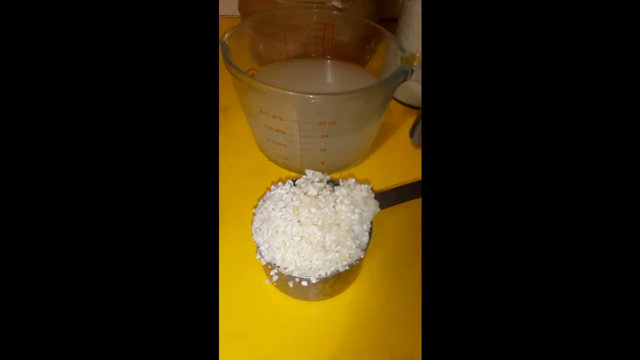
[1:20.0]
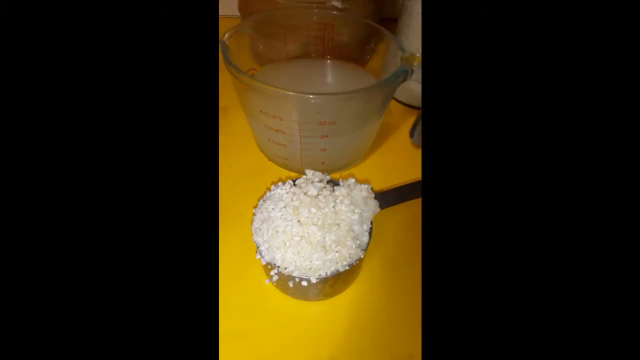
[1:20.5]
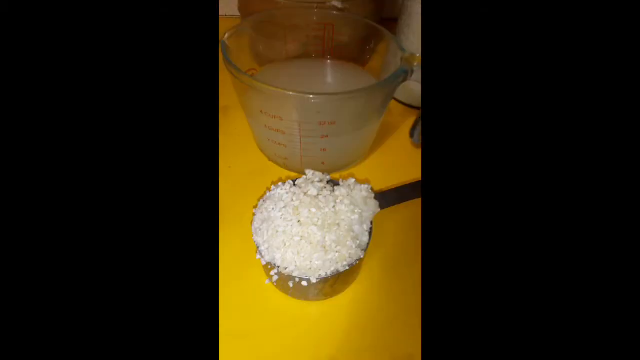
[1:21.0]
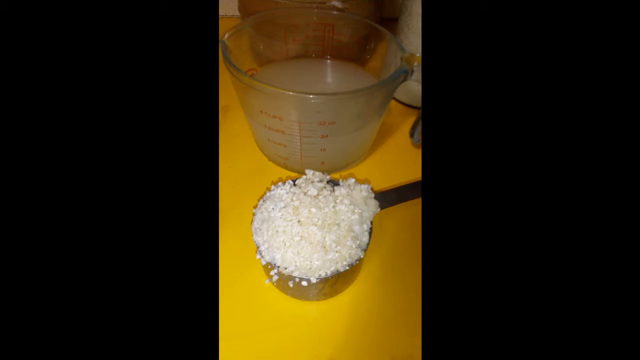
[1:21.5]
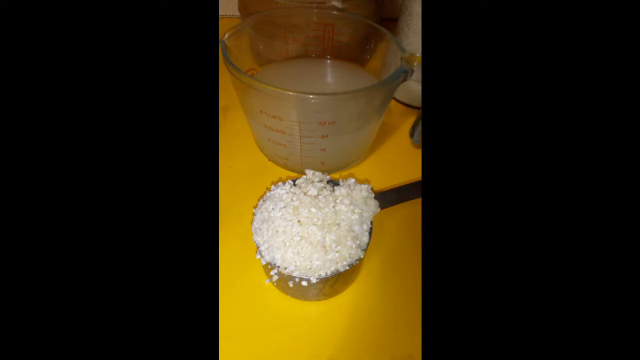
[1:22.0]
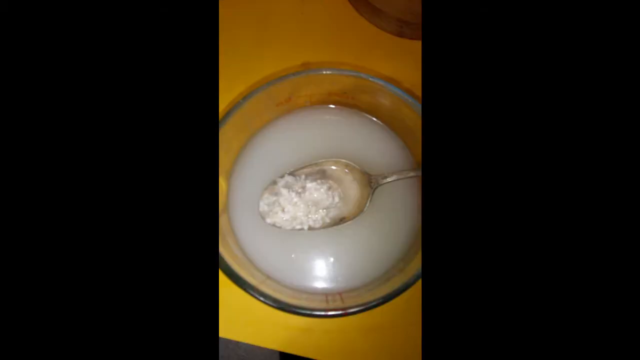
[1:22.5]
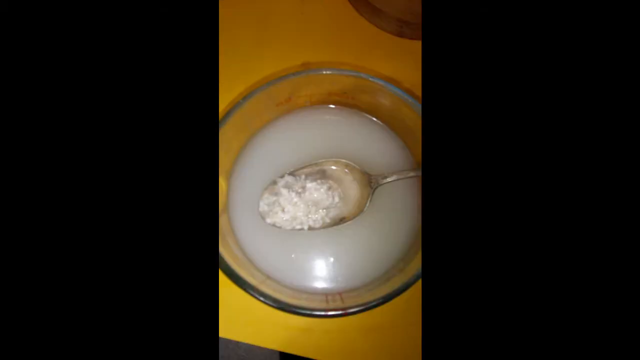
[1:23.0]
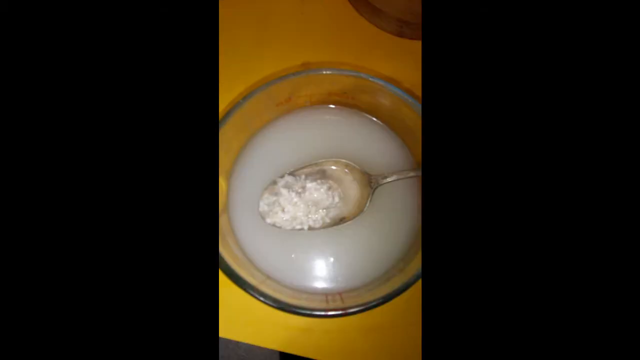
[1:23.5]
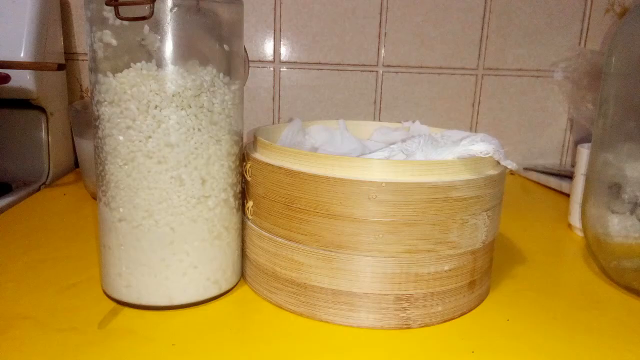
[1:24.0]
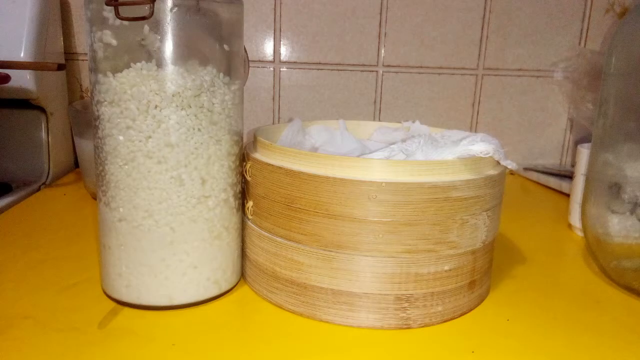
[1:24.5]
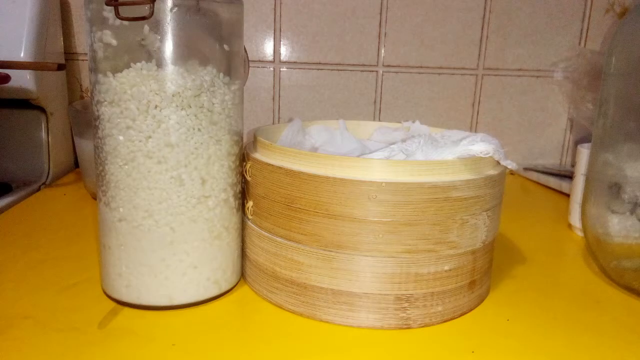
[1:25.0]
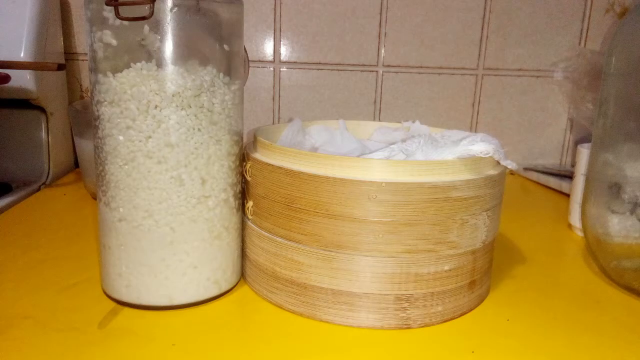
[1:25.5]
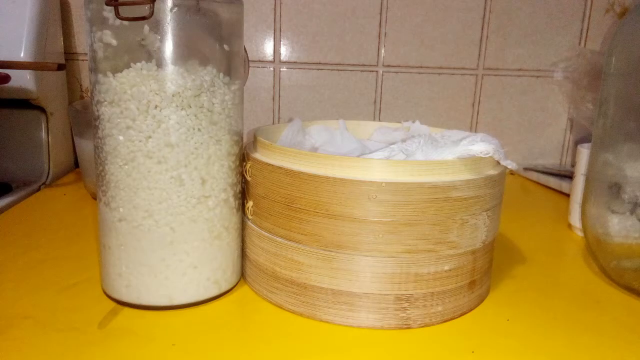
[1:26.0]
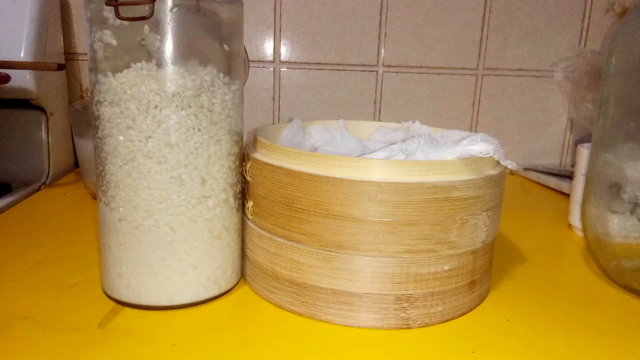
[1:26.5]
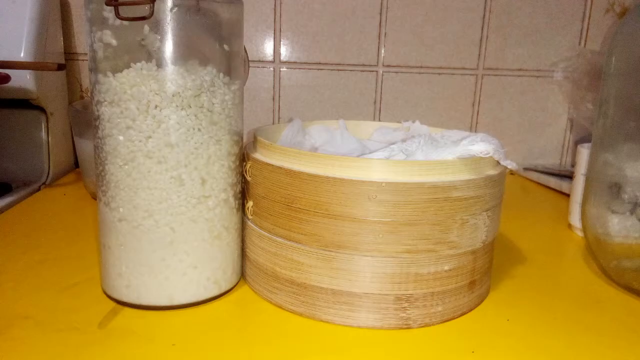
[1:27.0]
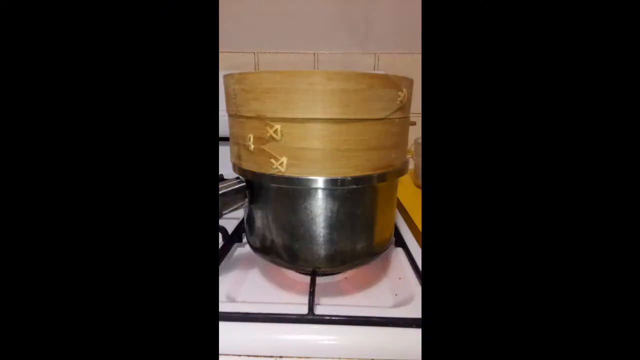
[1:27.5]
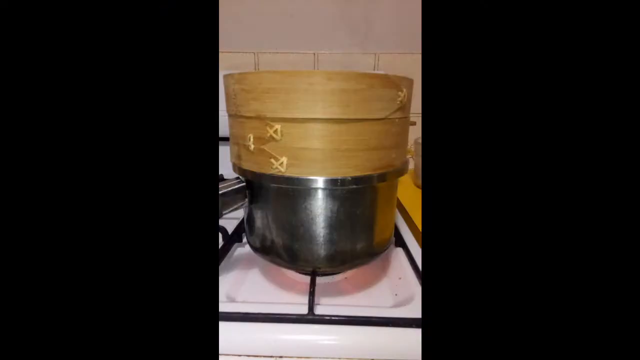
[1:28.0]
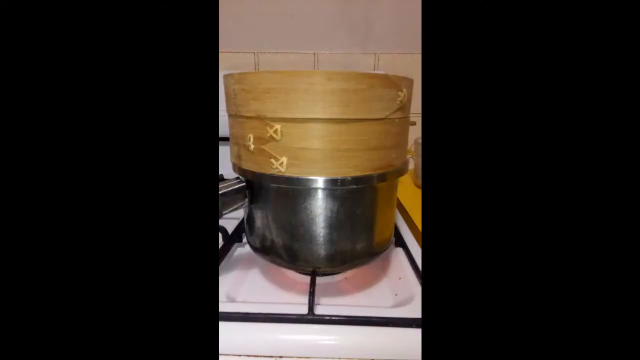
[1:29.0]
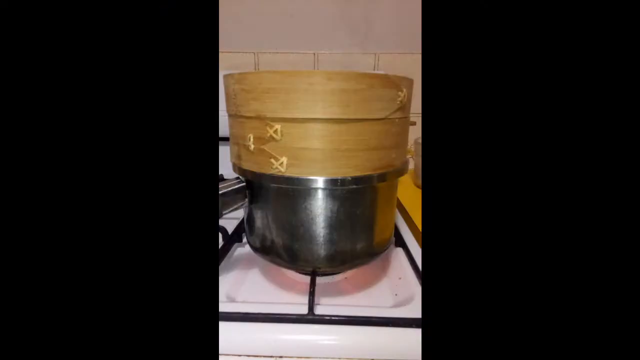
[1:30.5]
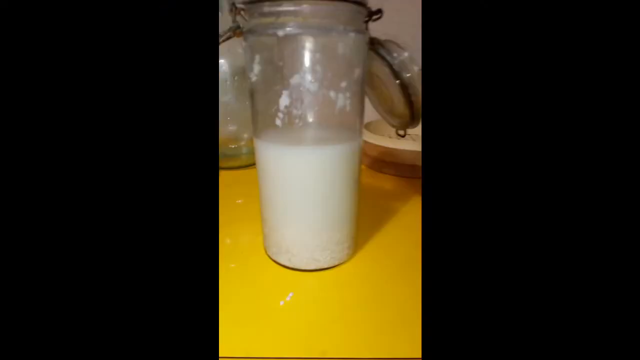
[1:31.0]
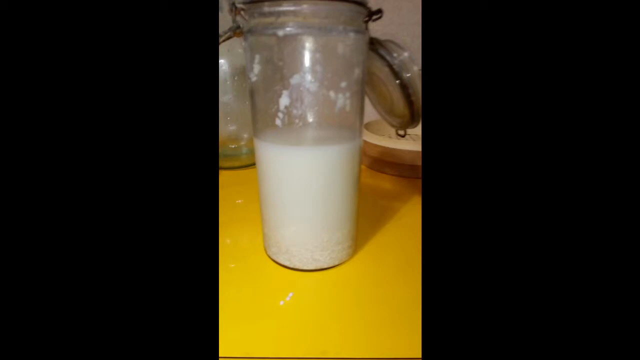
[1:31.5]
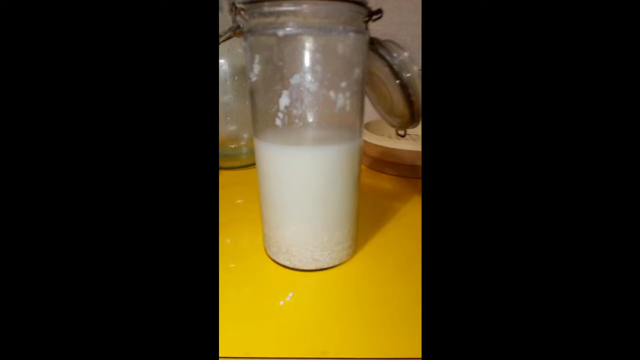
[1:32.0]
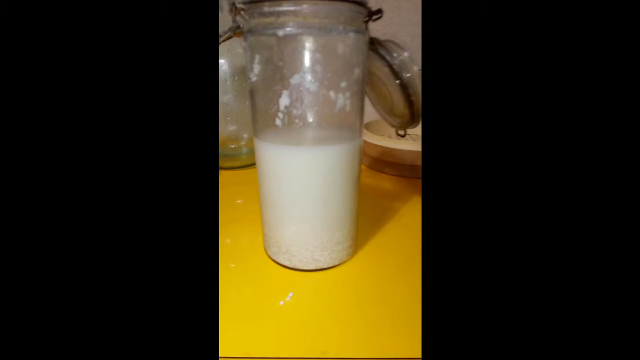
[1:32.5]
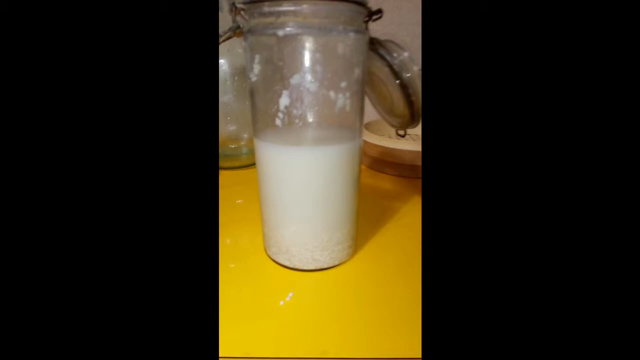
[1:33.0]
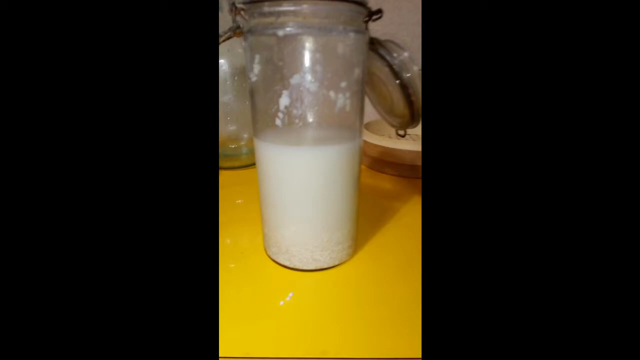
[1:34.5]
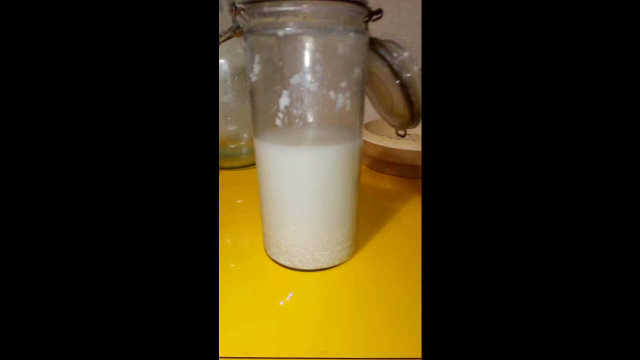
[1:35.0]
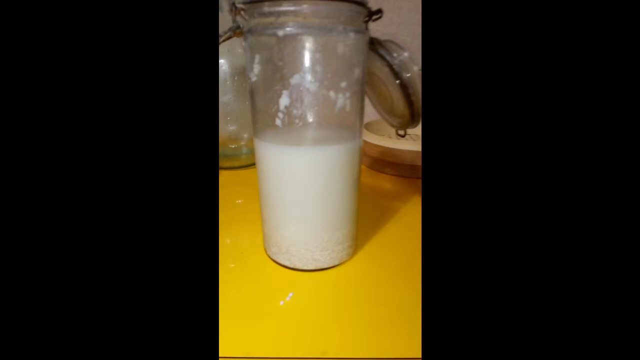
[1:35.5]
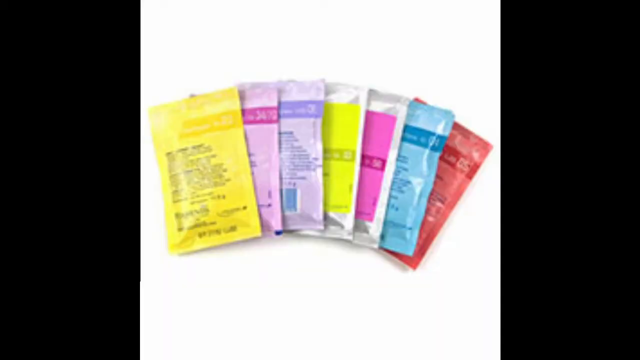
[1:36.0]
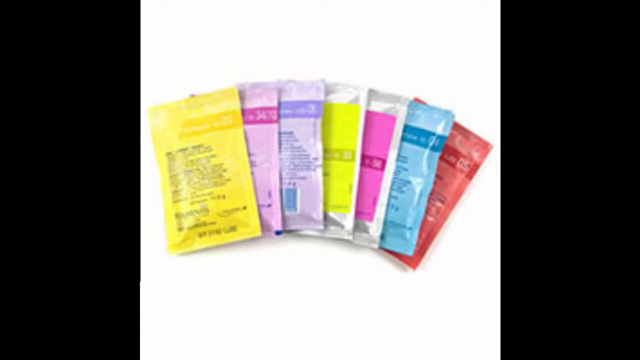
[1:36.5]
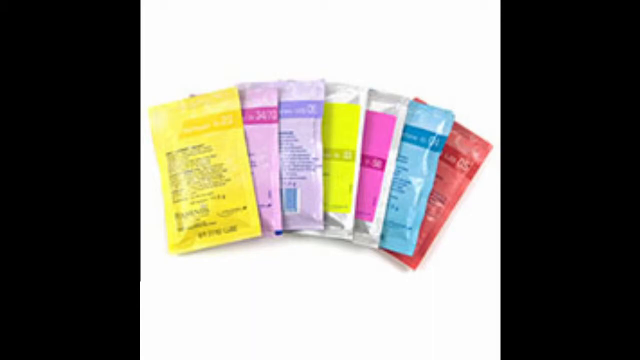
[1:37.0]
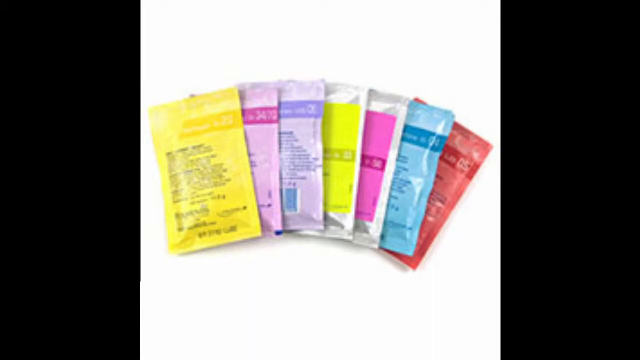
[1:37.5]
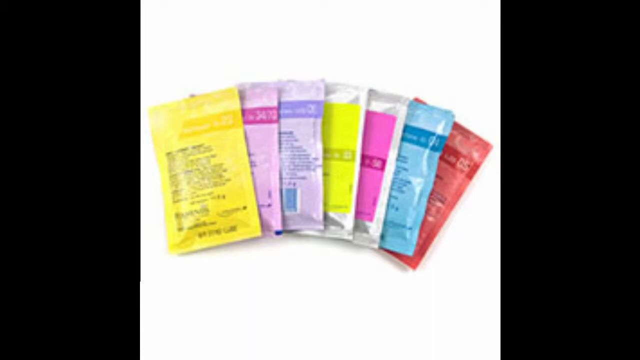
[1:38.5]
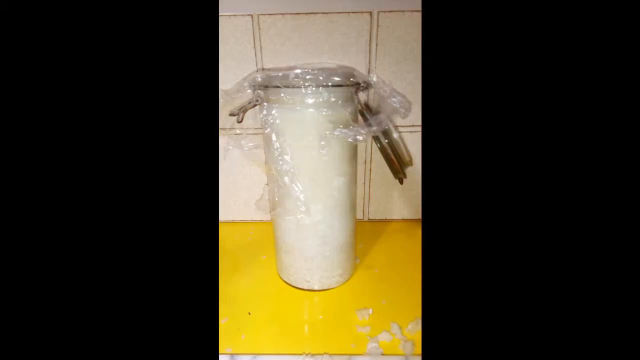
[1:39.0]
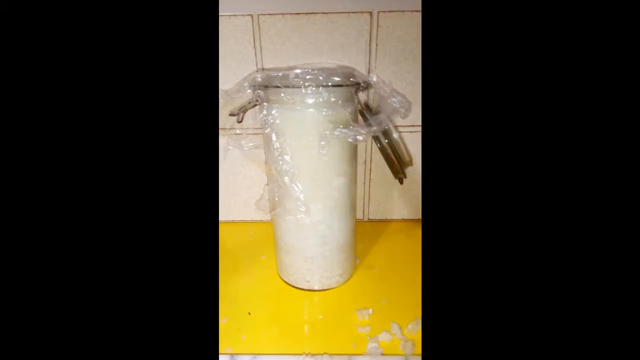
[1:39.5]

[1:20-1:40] A measuring cup holds about three cups of a very cloudy liquid that almost looks like lemon juice. The cooked rice, uncooked rice and water appear to have been left in the container for some time and then separated into the remaining water and the rice. The picture is taken on a white table. The water then seems to be filtered further in a bamboo-style container, and the liquid is apparently boiled in a pot and put back into the original container. A couple of colorful packets of something unidentifiable appear on screen, maybe some kind of yeast. Finally the original container is shown, apparently with the boiled liquid and the packet added together in it.